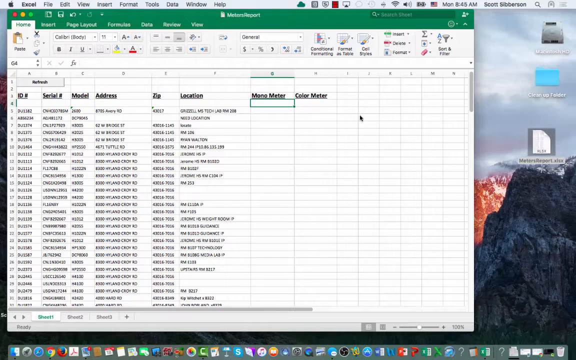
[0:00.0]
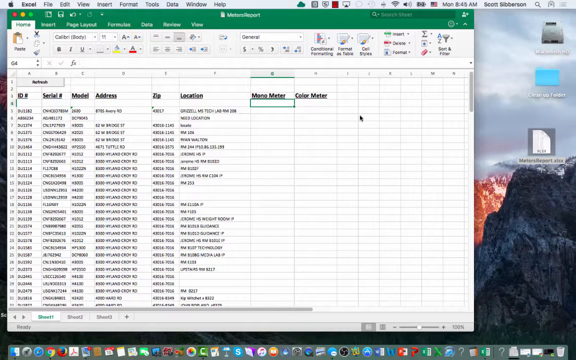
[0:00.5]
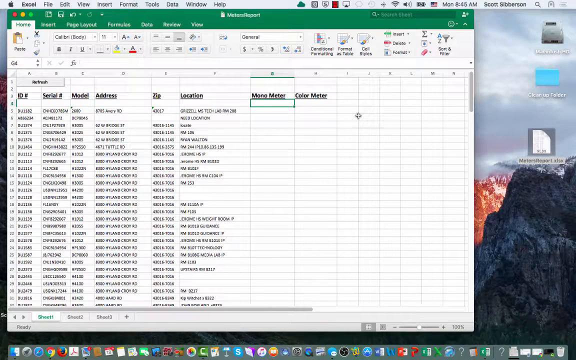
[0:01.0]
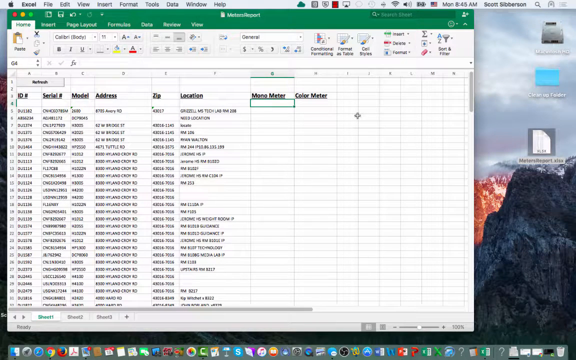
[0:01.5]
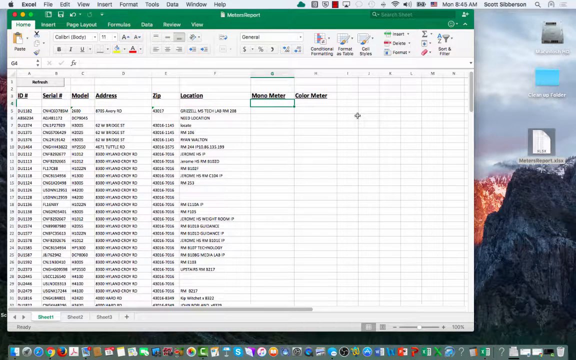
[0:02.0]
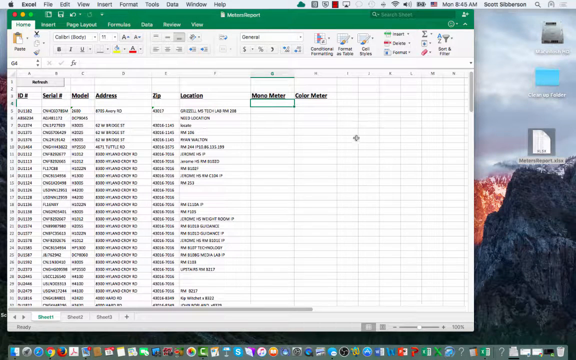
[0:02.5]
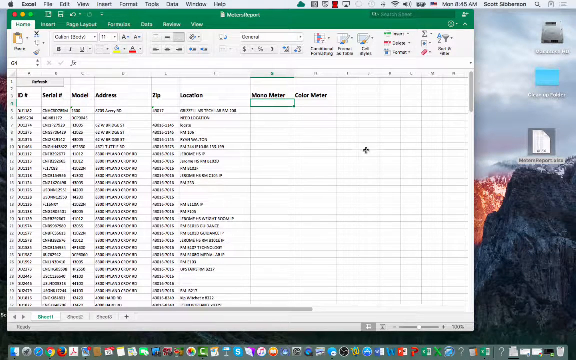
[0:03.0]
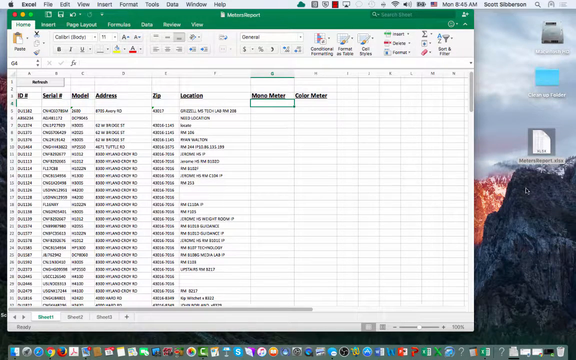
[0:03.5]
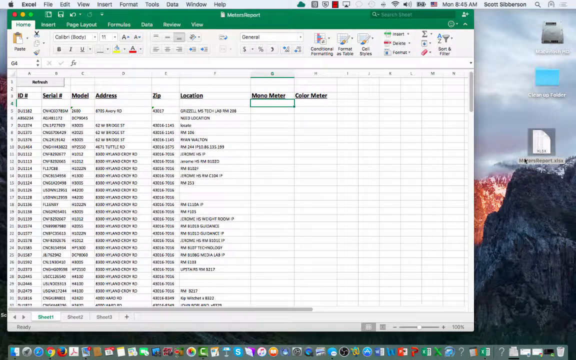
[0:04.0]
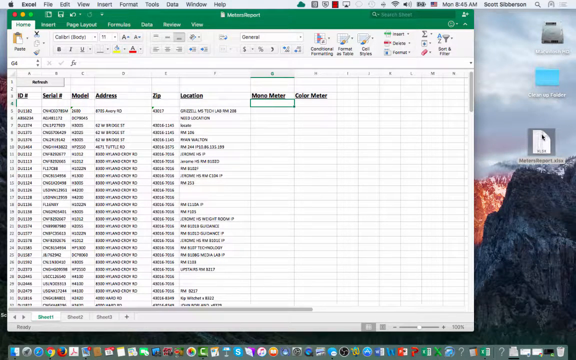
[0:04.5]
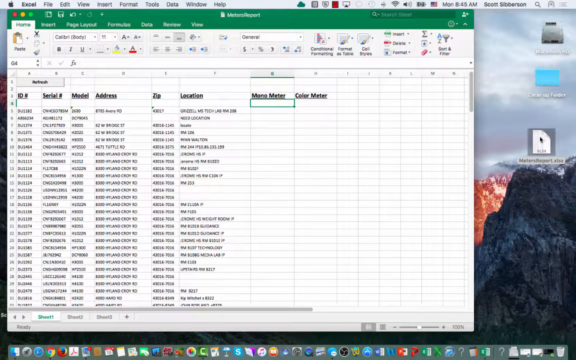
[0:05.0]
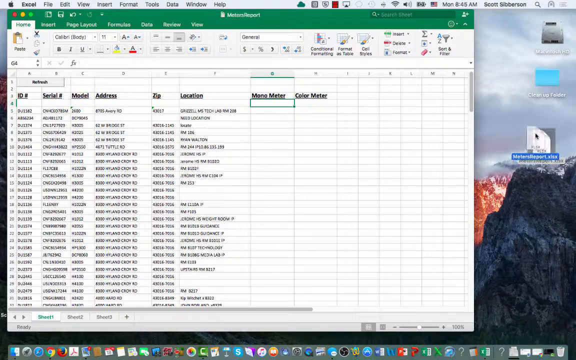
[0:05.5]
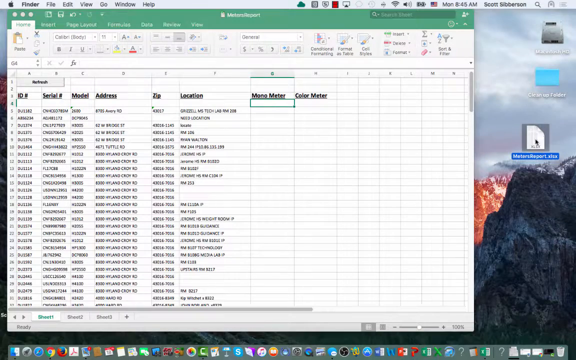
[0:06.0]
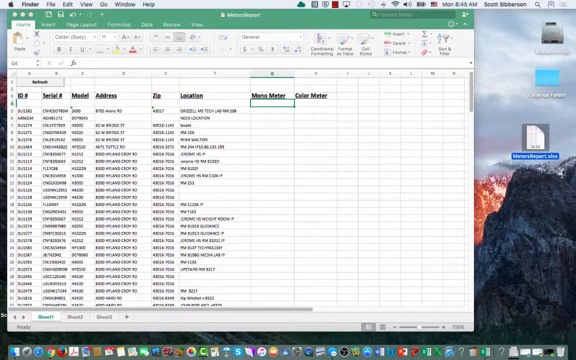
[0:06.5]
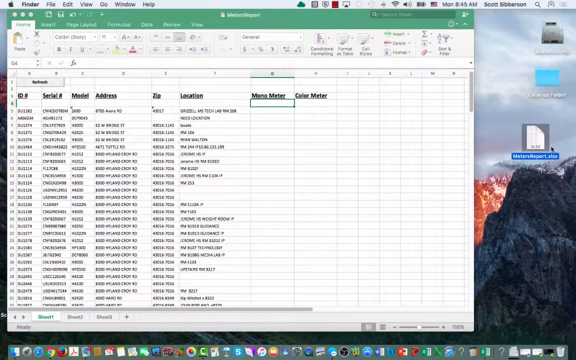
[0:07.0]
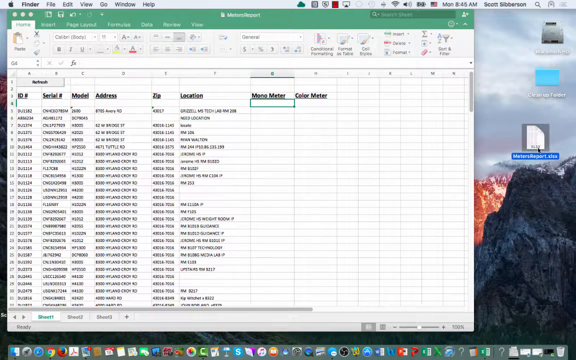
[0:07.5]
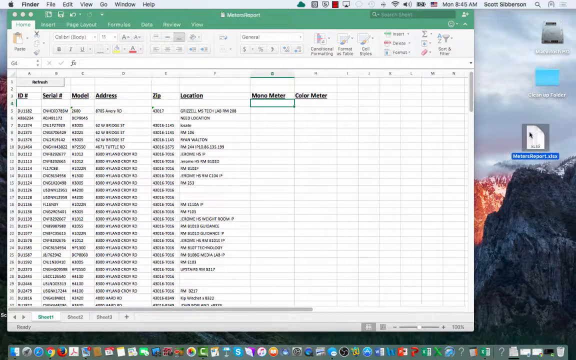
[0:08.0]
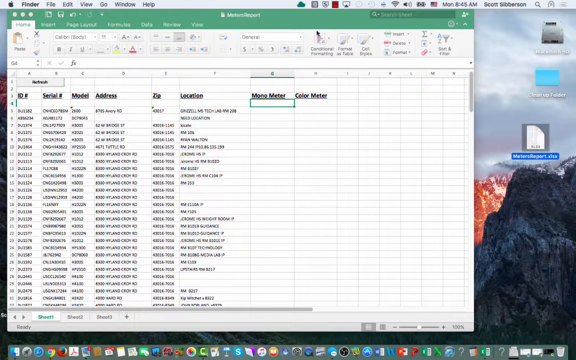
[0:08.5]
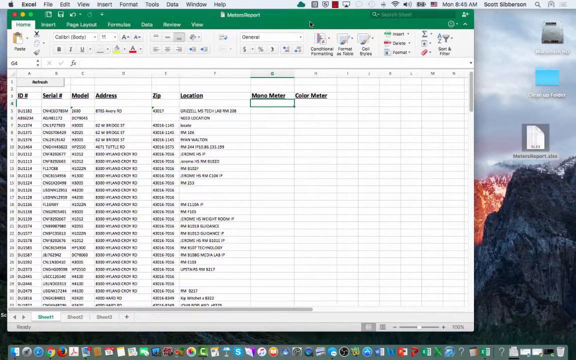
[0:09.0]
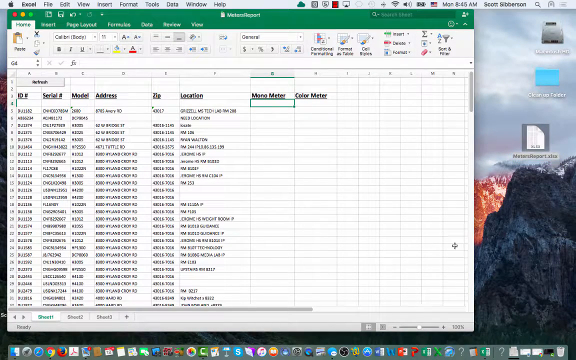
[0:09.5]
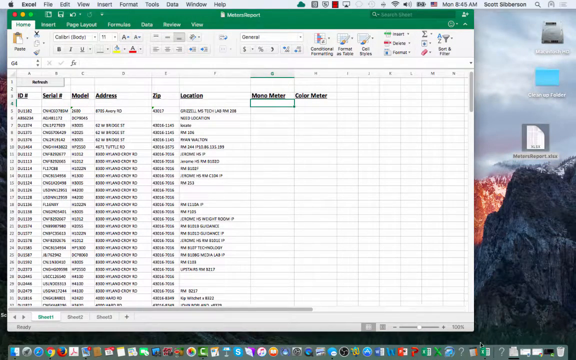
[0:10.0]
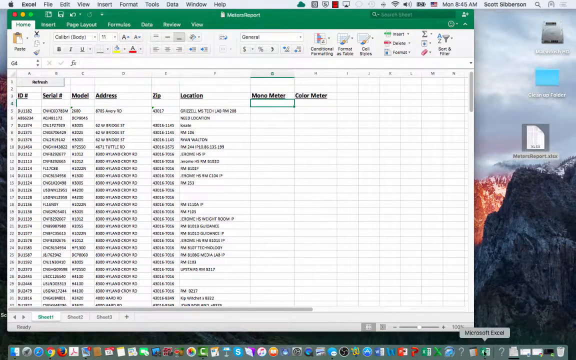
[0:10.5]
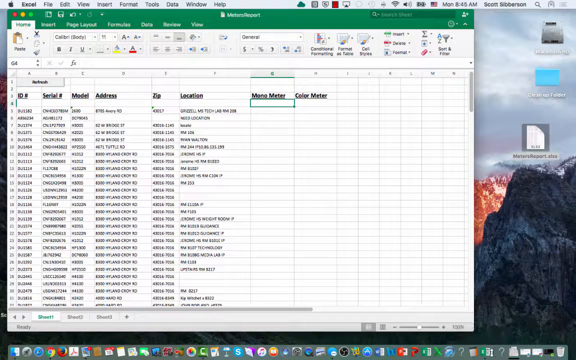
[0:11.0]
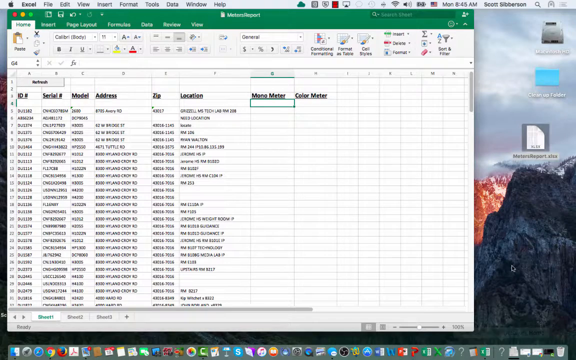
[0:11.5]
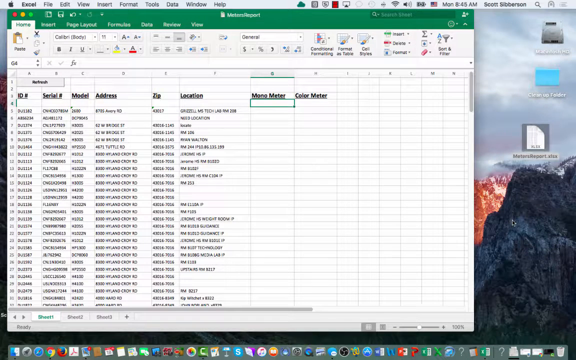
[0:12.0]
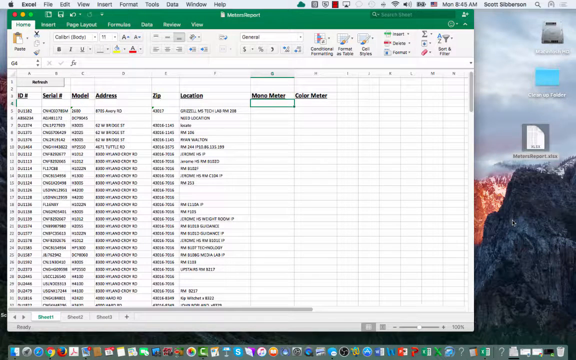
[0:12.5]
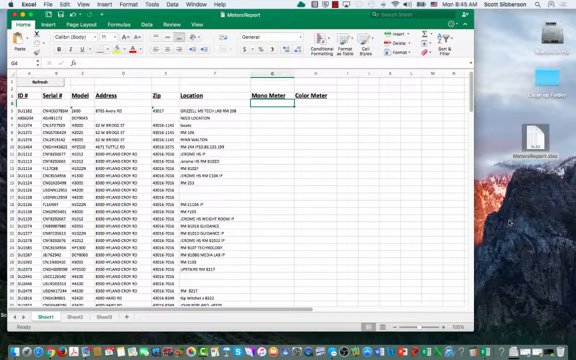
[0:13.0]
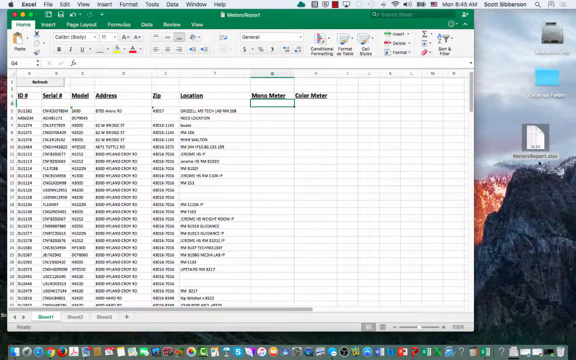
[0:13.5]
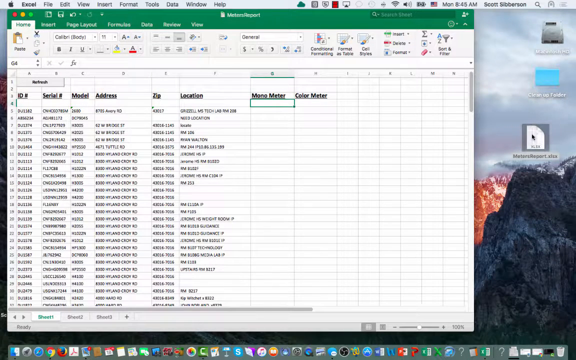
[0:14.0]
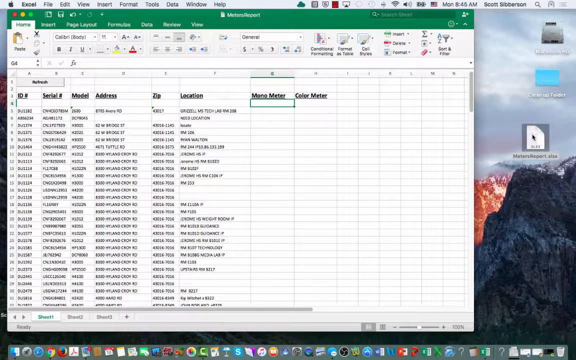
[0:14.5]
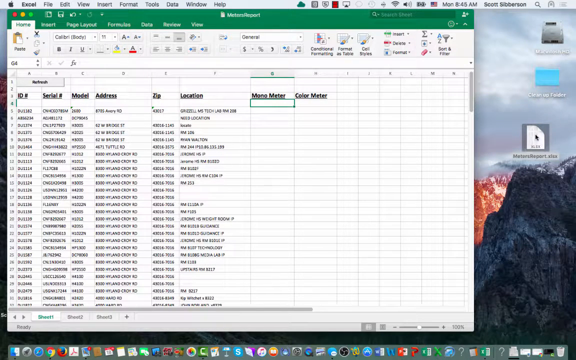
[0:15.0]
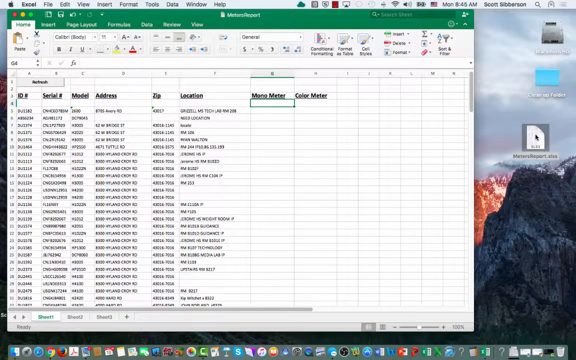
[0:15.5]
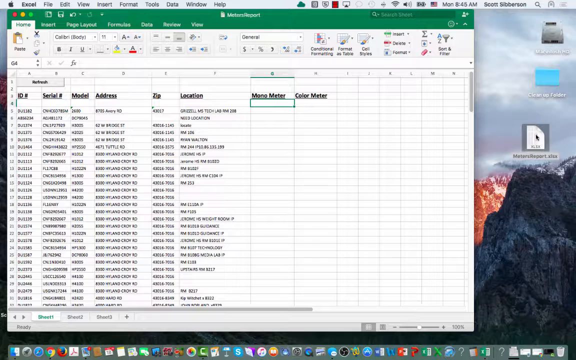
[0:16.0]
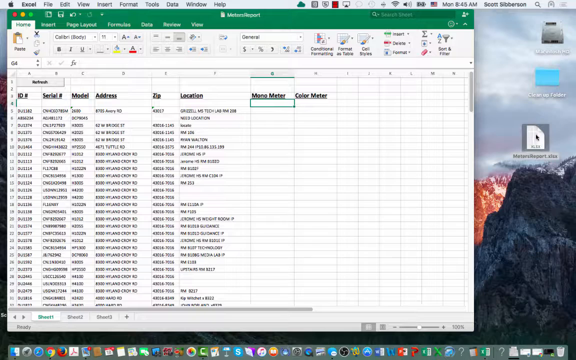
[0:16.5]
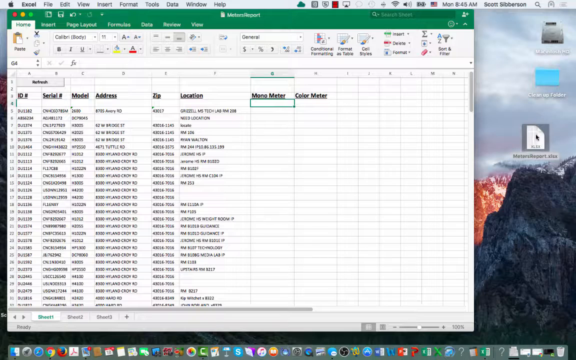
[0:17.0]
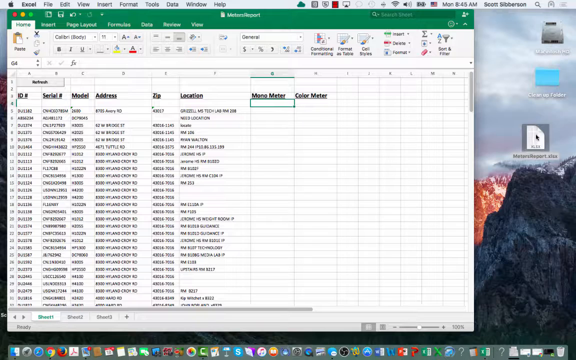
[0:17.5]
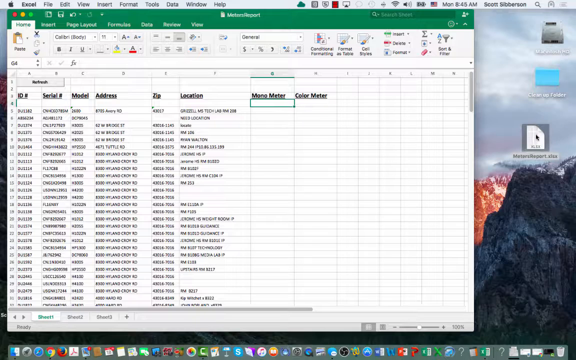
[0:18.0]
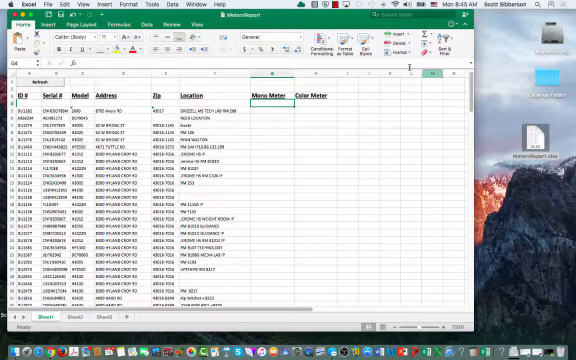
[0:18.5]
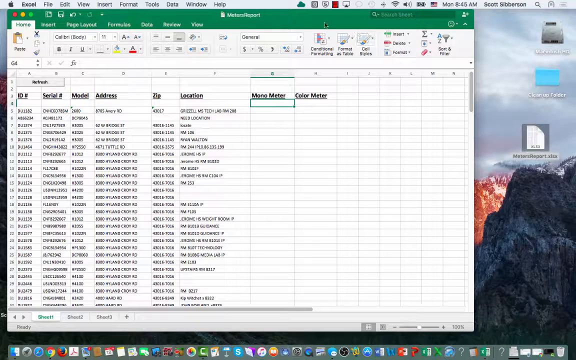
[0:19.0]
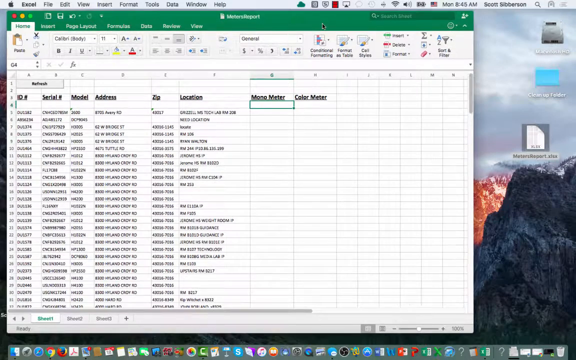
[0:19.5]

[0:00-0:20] Someone is screen-sharing the desktop of an Apple computer, with the Apple logo at the very top. The clock reads Monday 8:45 a.m., a small American flag icon is visible, and the name "Scott Siverson" appears in the top right-hand corner. Several desktop icons are visible: one labeled "Macintosh hard drive", below it "cleanup folder", and then an Excel document titled "Meter Report". The document is open on screen and appears to be a list with eight columns and many rows. The columns are headed "ID number", "serial number", "model", "address", "zip", "location", "monometer" and "color meter".